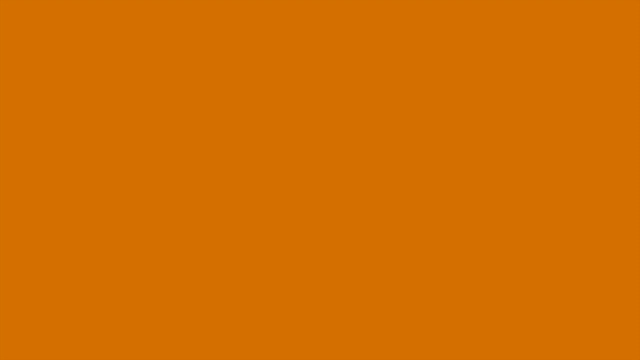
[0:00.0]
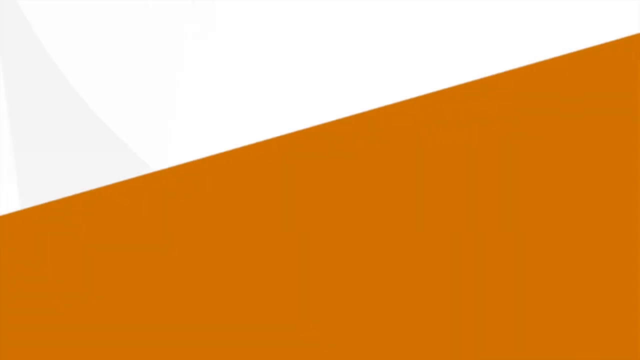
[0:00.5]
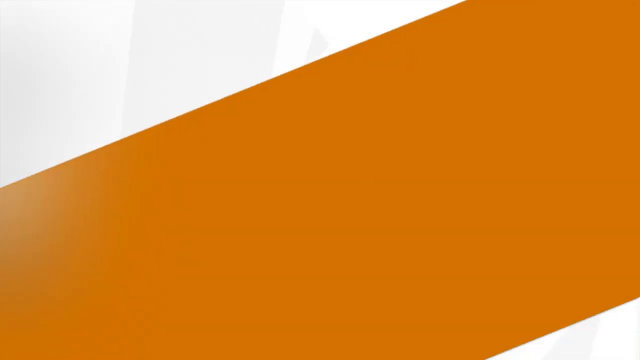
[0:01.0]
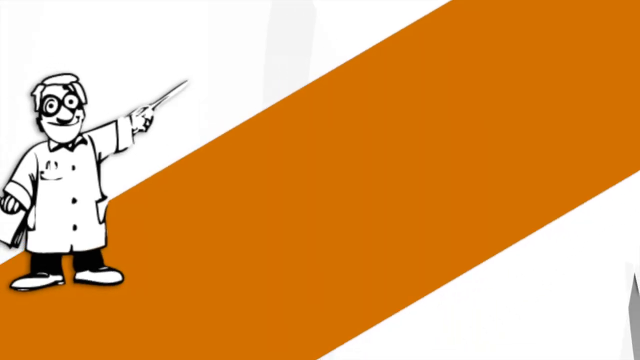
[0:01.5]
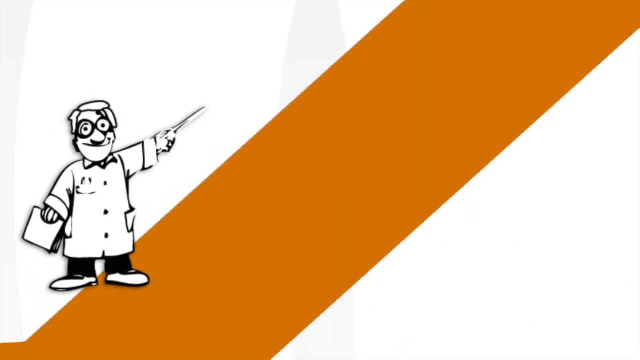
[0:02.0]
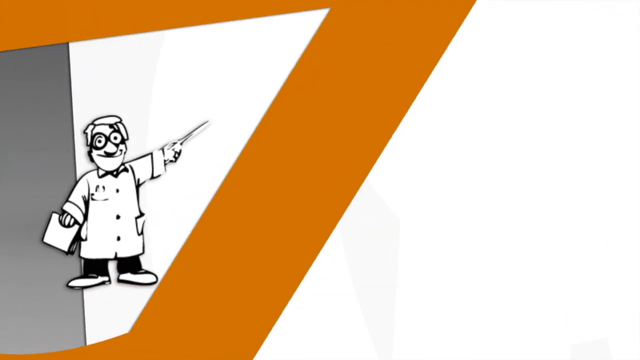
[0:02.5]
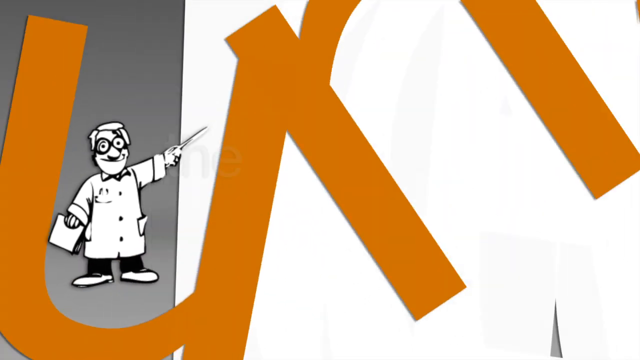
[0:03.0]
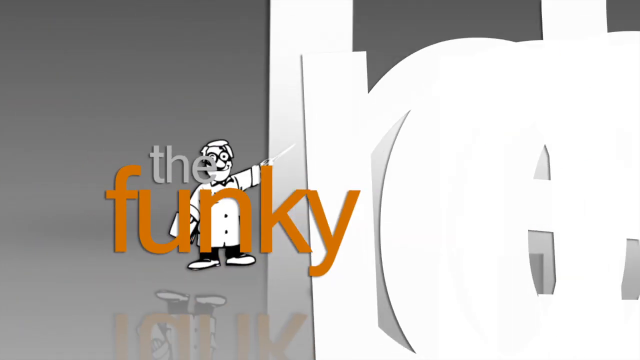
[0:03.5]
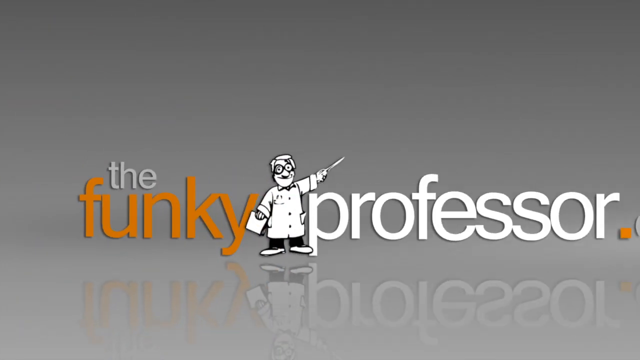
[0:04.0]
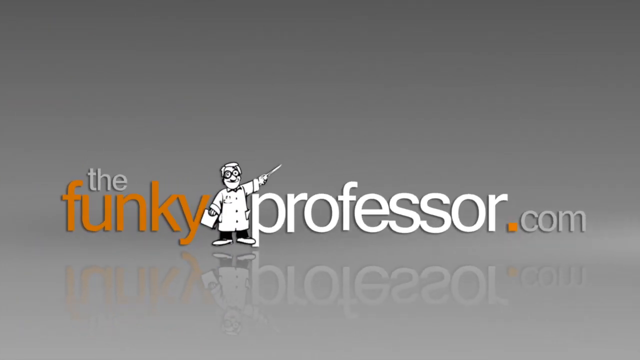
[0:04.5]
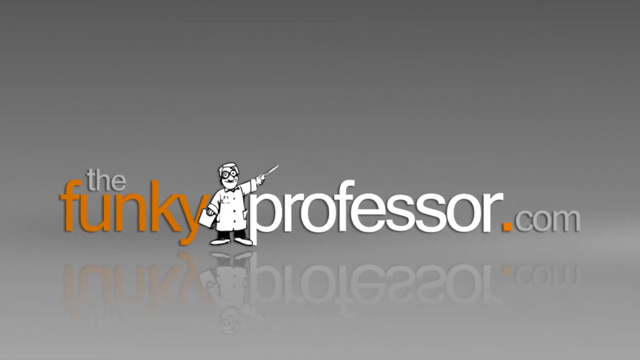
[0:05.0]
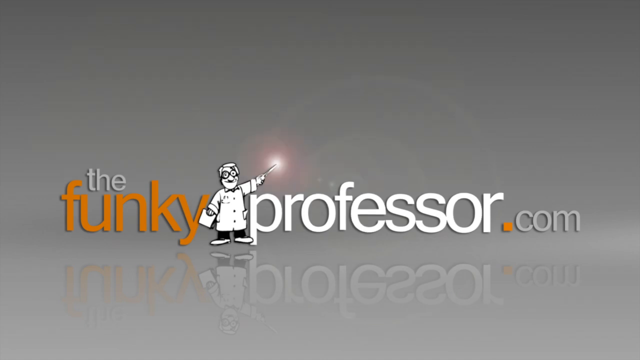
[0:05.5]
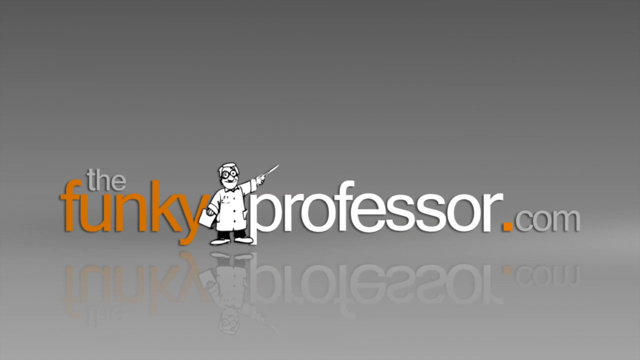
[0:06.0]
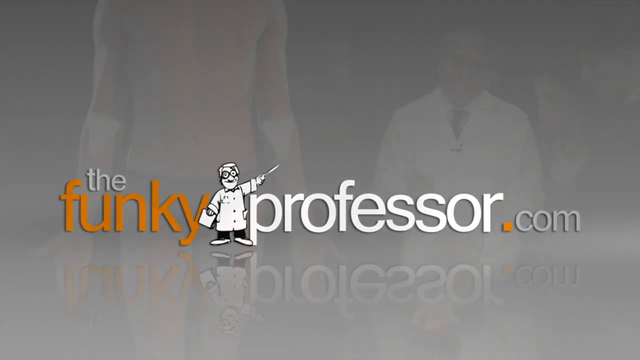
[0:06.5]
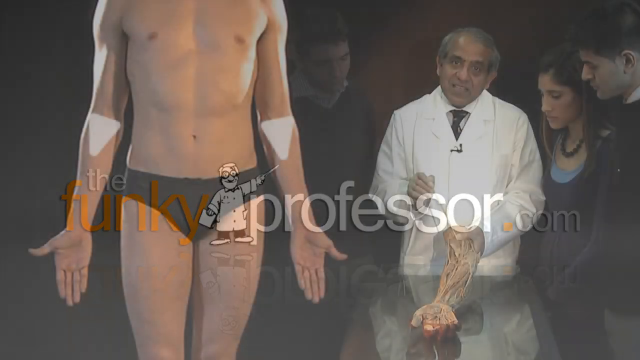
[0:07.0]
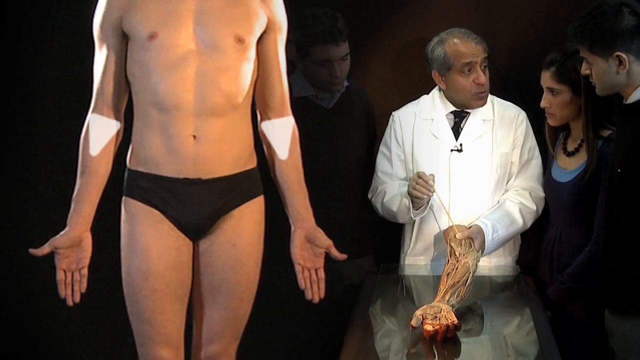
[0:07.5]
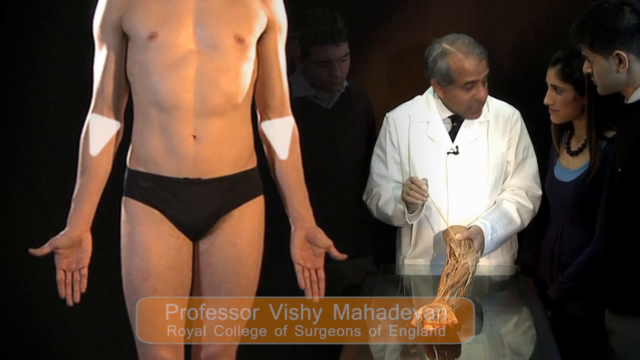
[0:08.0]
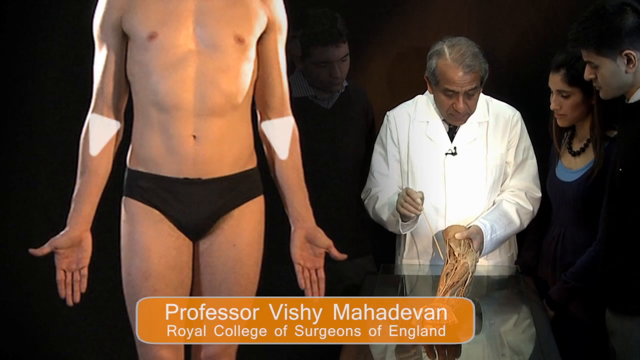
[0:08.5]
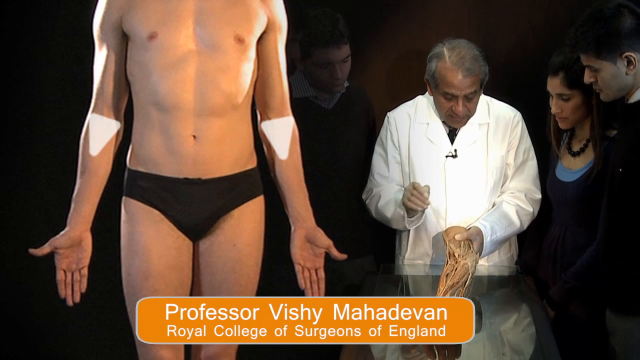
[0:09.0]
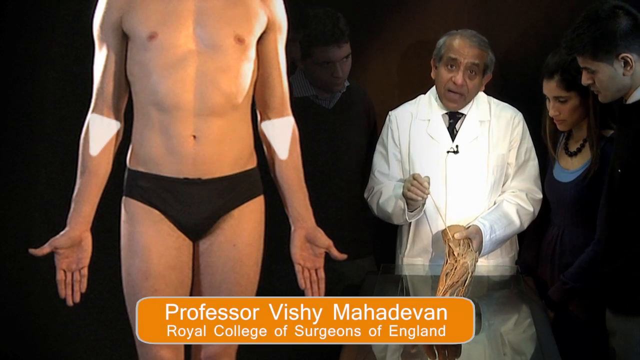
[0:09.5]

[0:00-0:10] An opening animation begins with an orange screen that turns into a logo reading "thefunkyprofessor.com" on a gray background, with the title reflected on the ground. The words "the" and "com" are in light gray writing, "funky" and the dot are in orange, and "professor" is in white. Between "funky" and "professor" there is a small drawn man who looks like a professor. The next shot shows a man on the left wearing black underwear, his arms down by his sides with his palms facing away from him, in front of him, and inverted triangles on his forearms at the elbow. Professor Vishy Mahadevan, from the Royal College of Surgeons of England, wears a white coat and refers to something he holds in his left hand, something like a fake body part with veins all over it. He uses a stick to point at certain parts of the arm. A man on his right and a woman and a man on his left watch him.